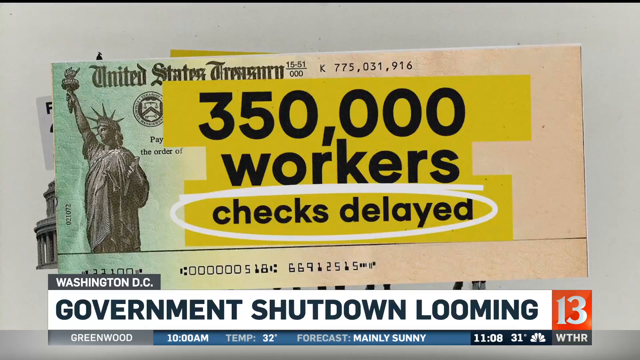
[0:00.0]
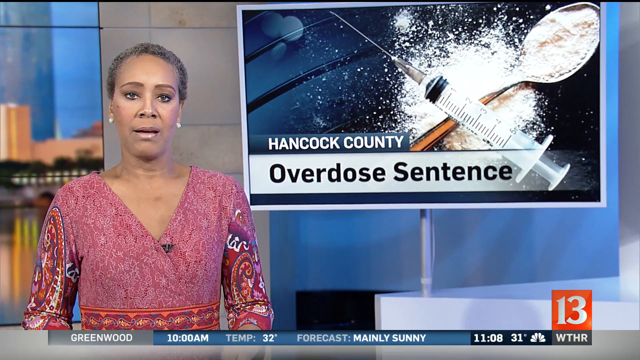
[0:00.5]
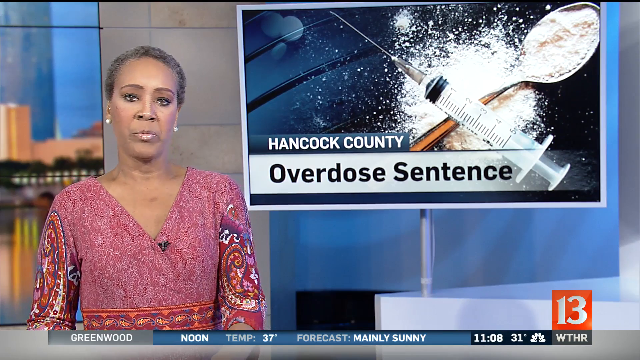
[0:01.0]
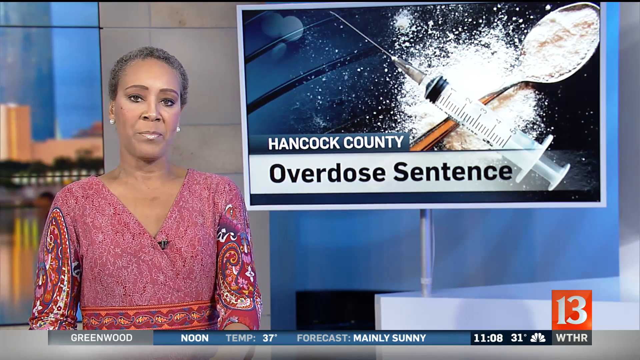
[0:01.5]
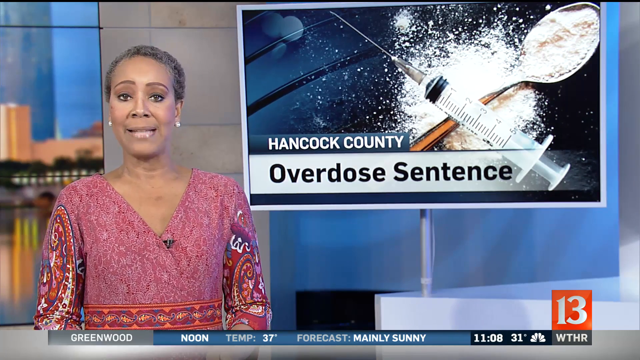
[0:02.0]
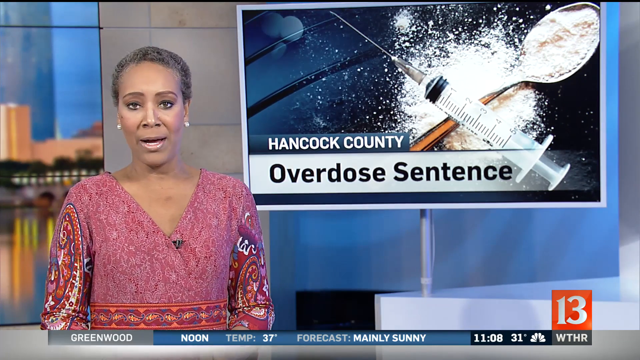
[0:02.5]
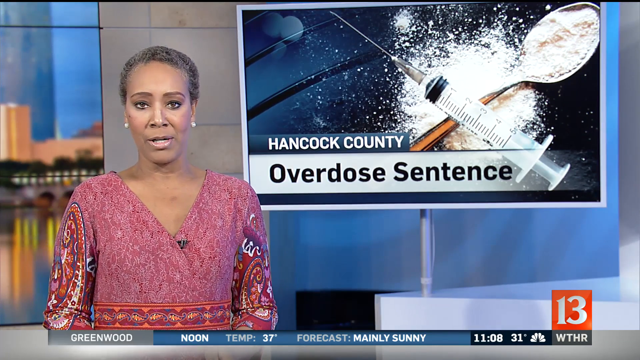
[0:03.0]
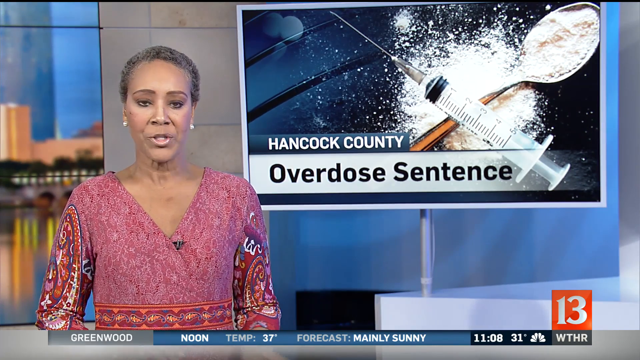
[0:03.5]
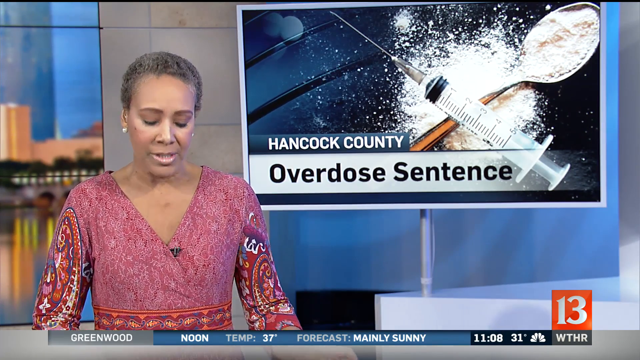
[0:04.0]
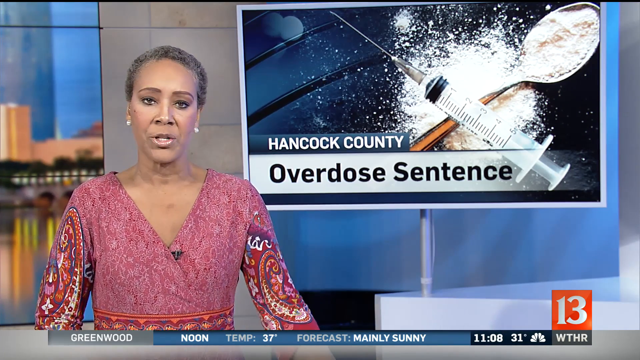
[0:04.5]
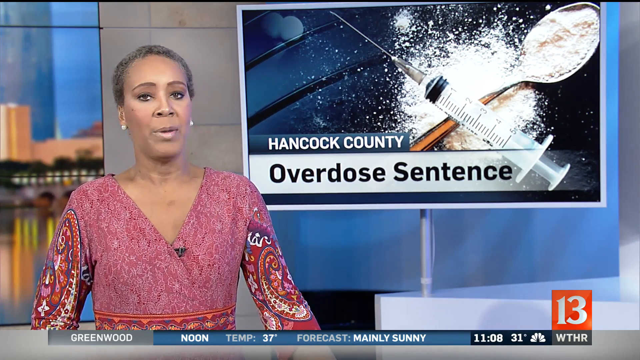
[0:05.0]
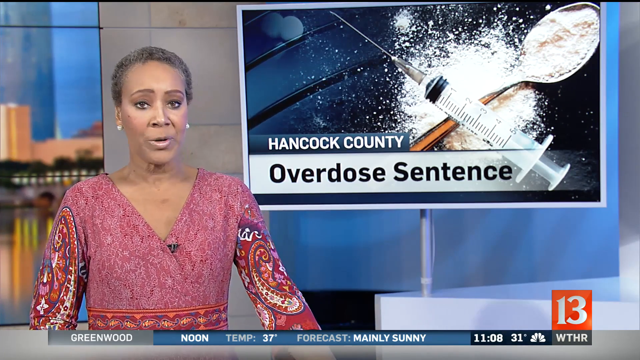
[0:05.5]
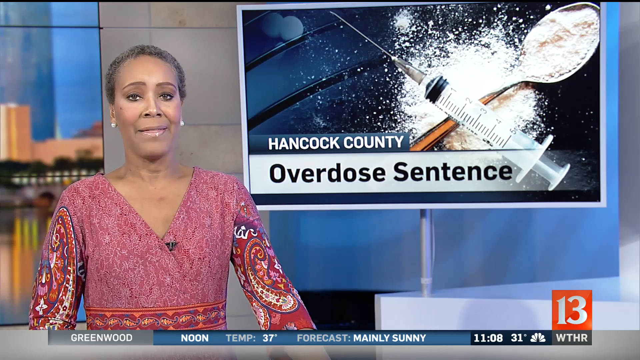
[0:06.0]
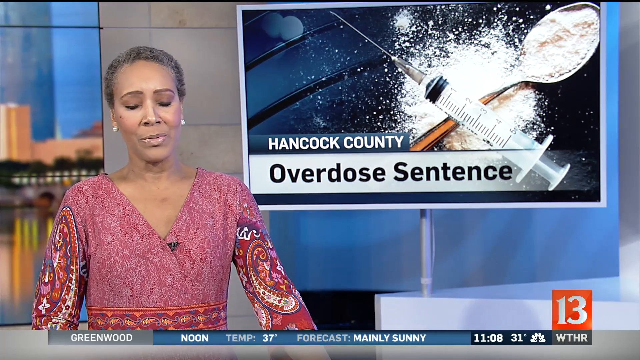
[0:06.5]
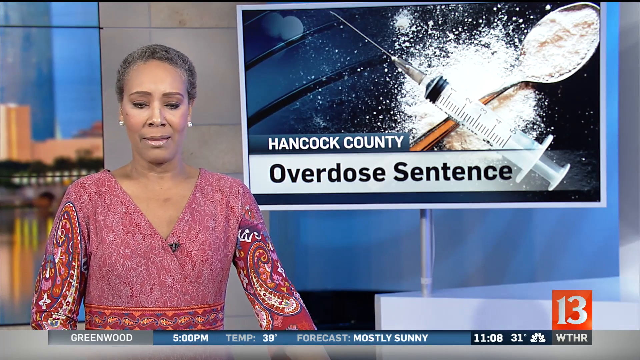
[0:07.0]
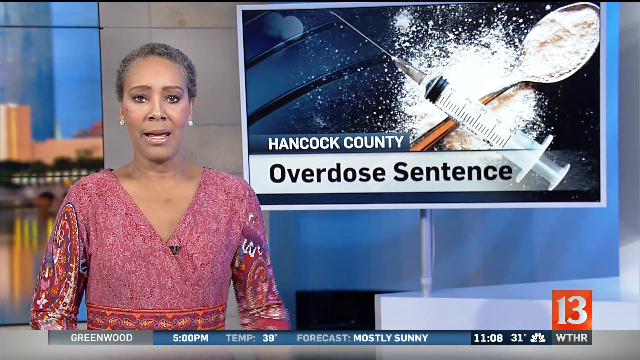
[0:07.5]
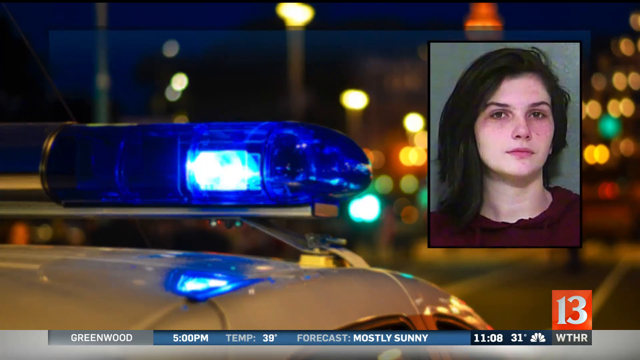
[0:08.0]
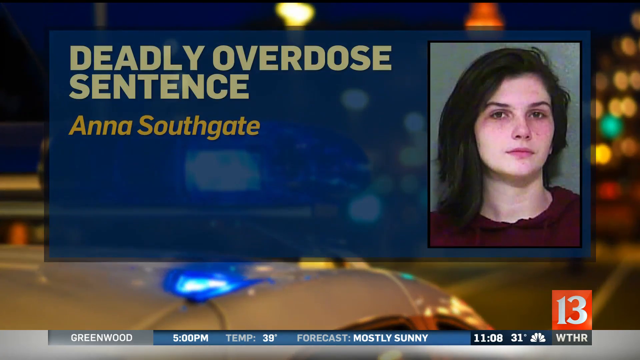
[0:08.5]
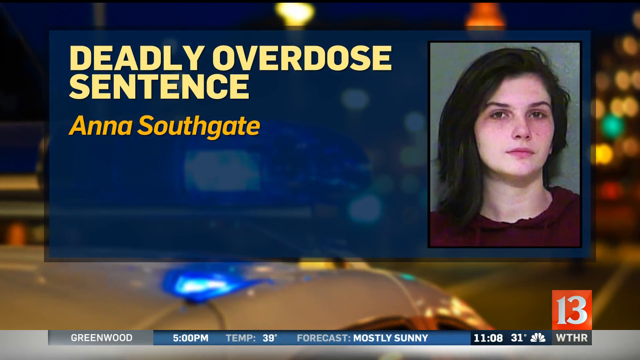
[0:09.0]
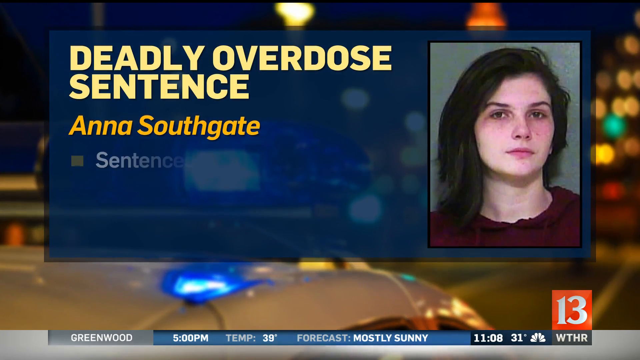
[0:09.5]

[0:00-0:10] The video first shows something about 30,000 workers, with checks delayed and a government shutdown looming. Then comes a report on an overdose sentence out of Hancock County, showing cocaine, a needle, and a spoon with cocaine in it. The reporter is on the left side of the screen. A deadly overdose sentence is presented, concerning a woman named Anna Southgate, and a picture of her is shown on the right. The report is from channel 13, and the weather, temperature, forecast and time are shown along the bottom.